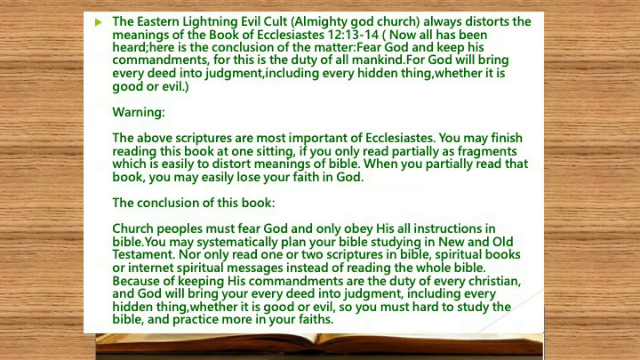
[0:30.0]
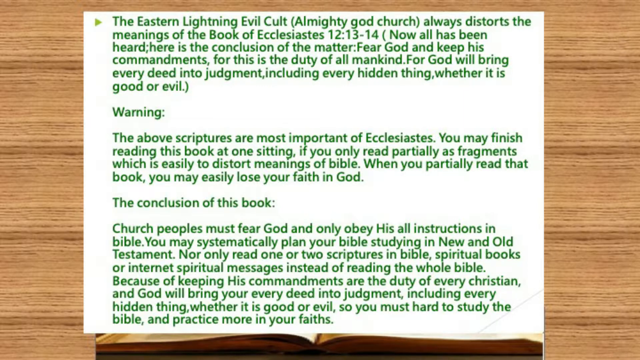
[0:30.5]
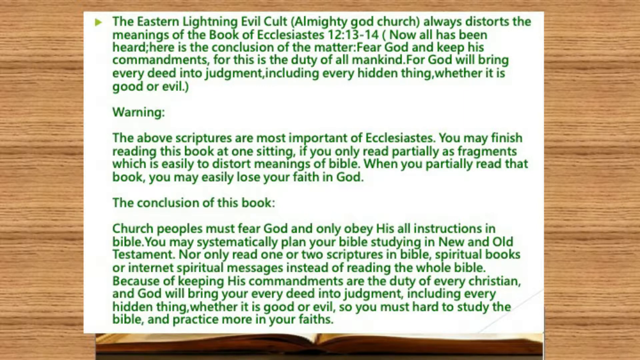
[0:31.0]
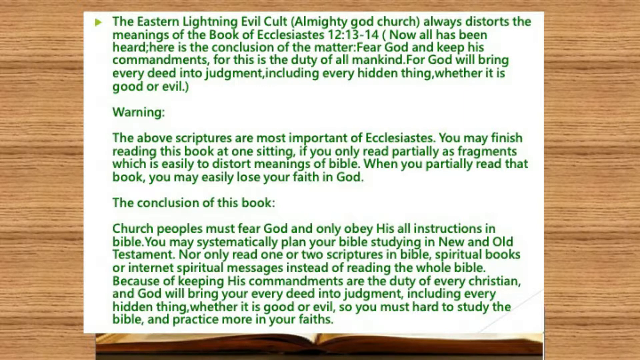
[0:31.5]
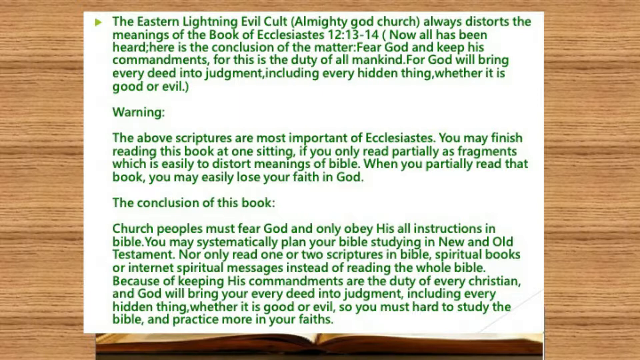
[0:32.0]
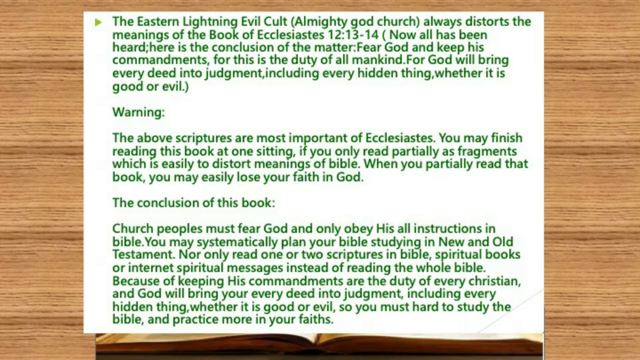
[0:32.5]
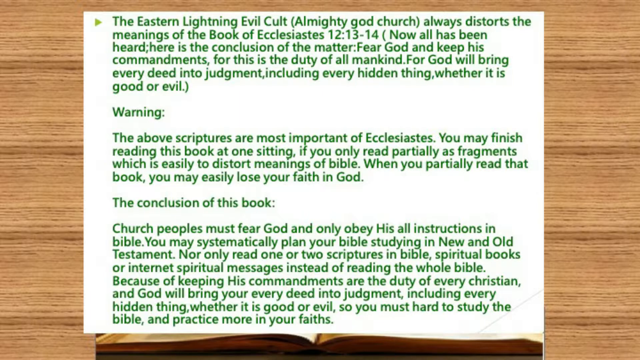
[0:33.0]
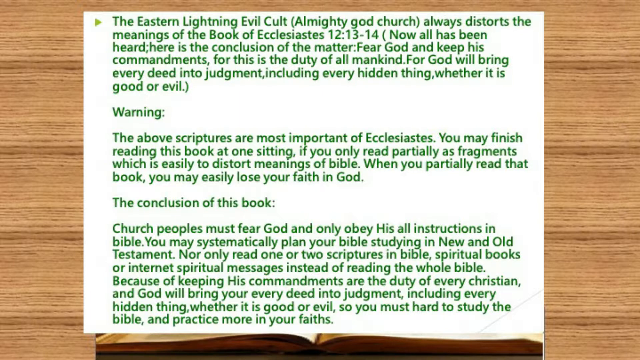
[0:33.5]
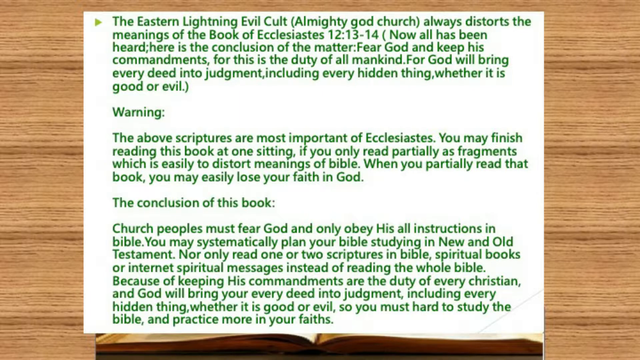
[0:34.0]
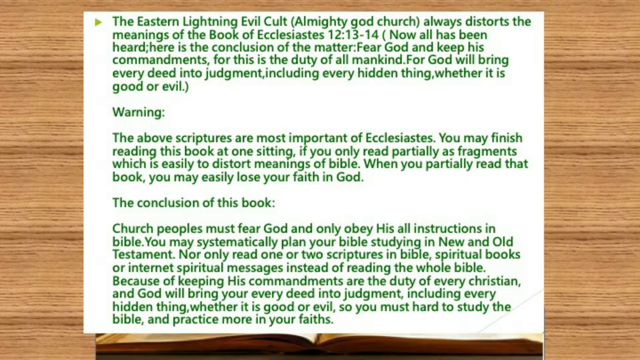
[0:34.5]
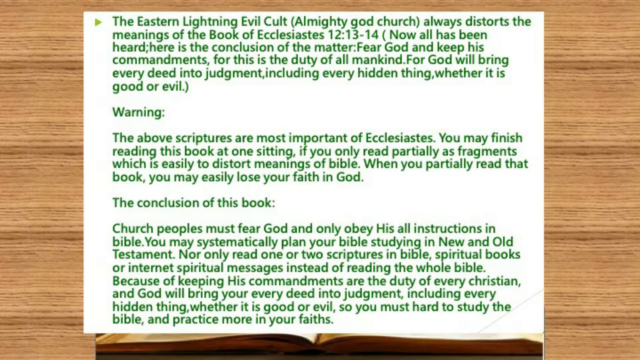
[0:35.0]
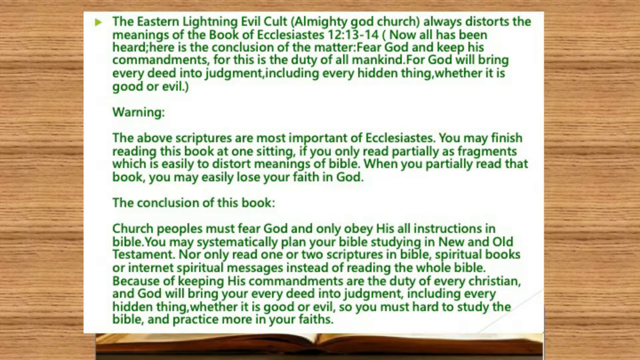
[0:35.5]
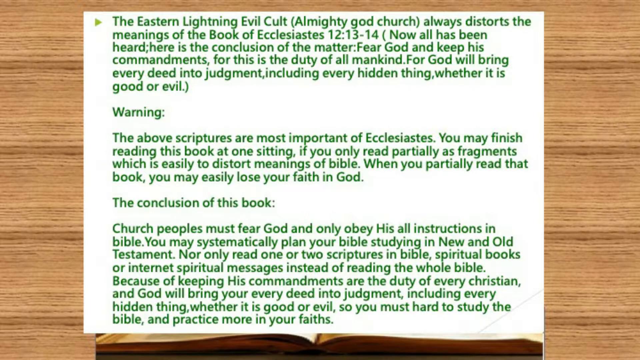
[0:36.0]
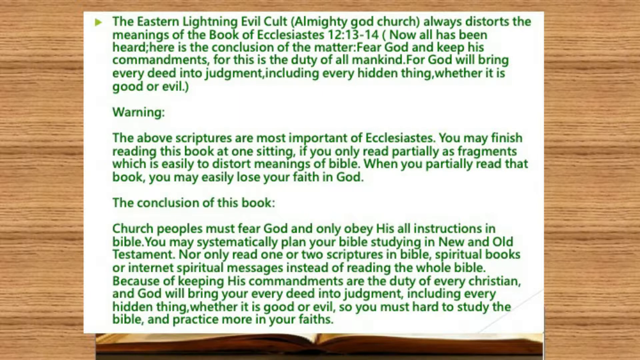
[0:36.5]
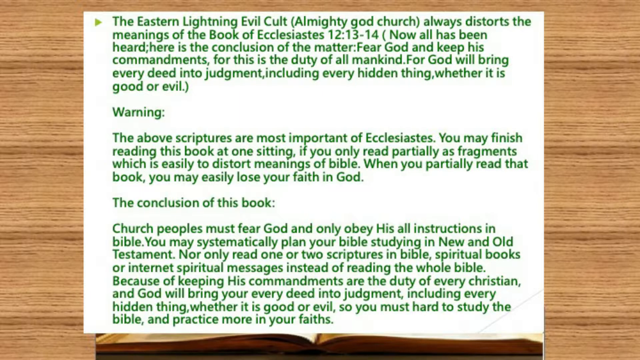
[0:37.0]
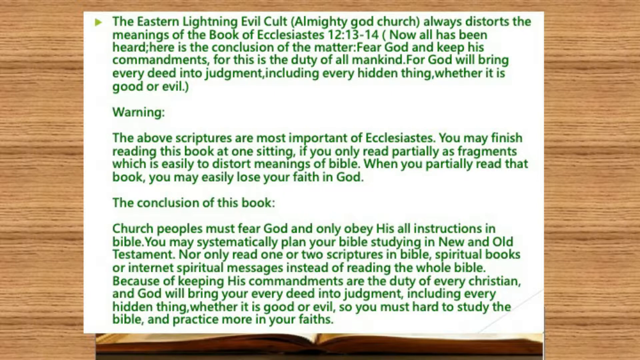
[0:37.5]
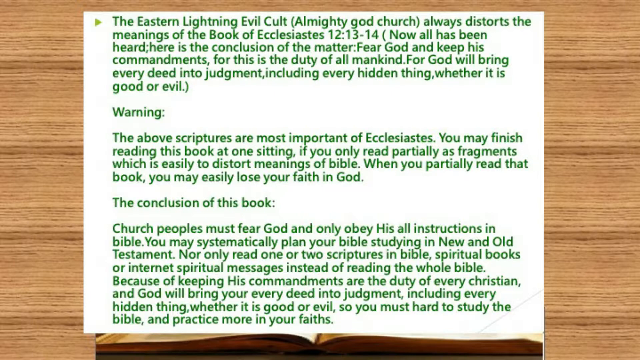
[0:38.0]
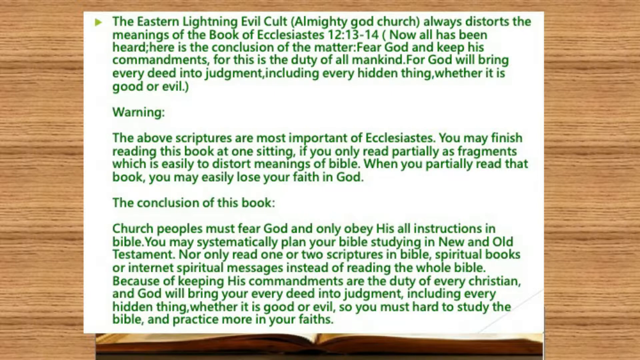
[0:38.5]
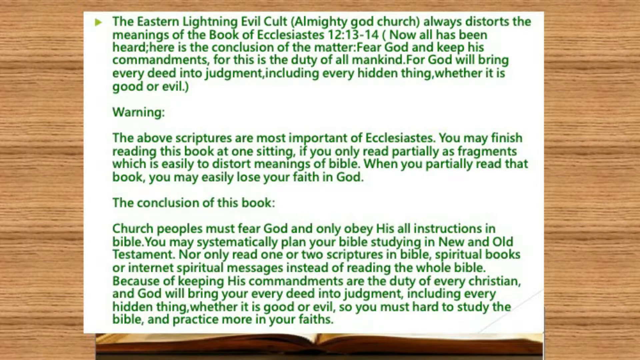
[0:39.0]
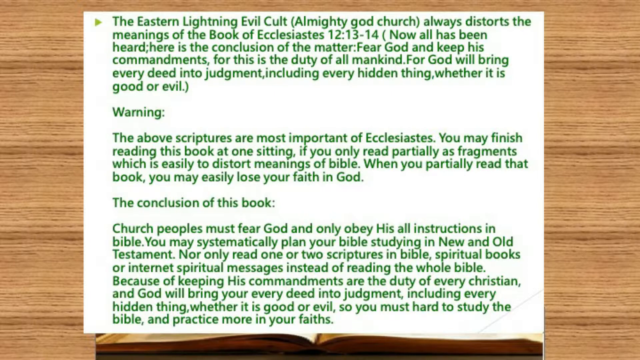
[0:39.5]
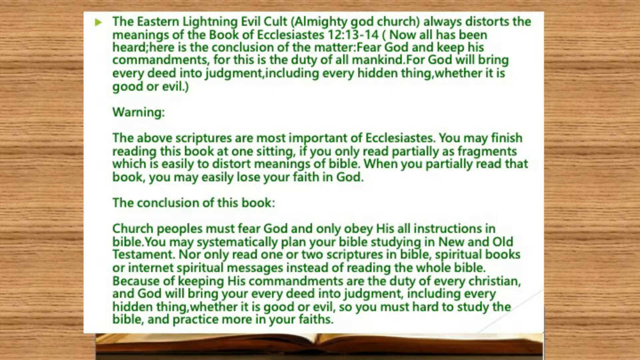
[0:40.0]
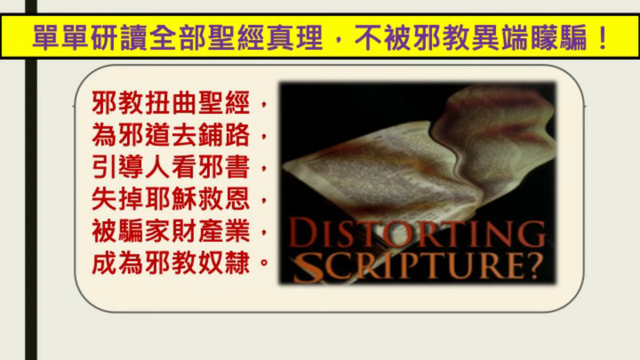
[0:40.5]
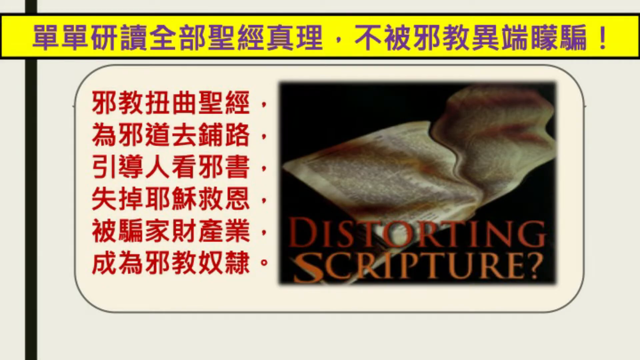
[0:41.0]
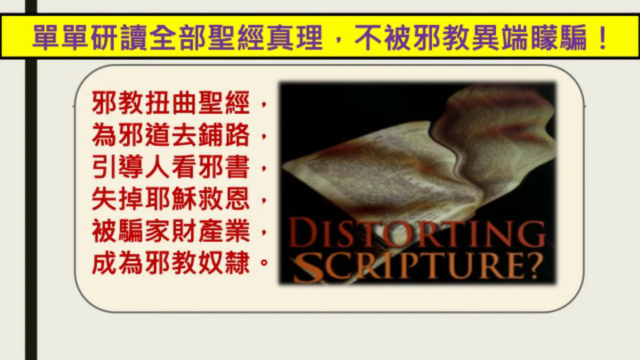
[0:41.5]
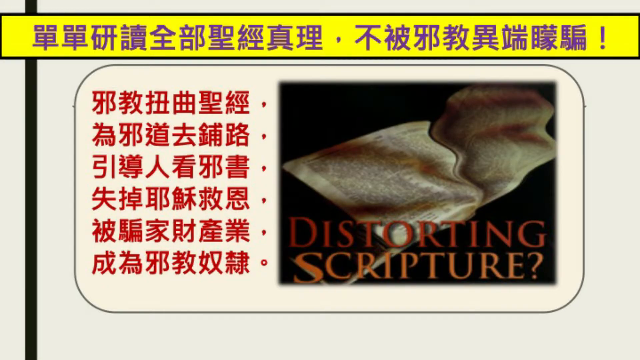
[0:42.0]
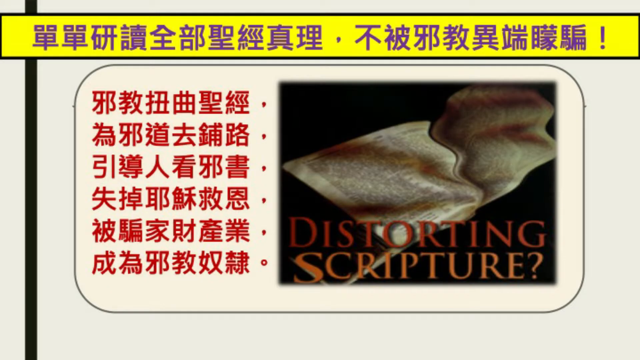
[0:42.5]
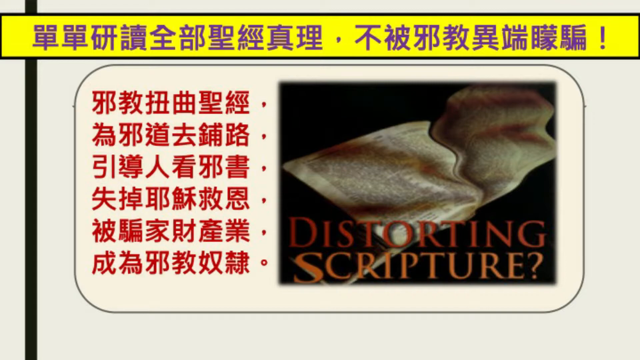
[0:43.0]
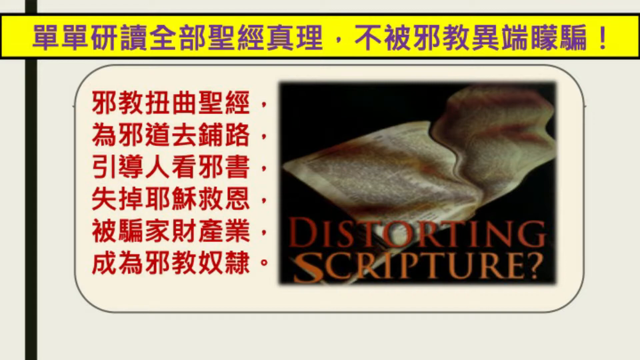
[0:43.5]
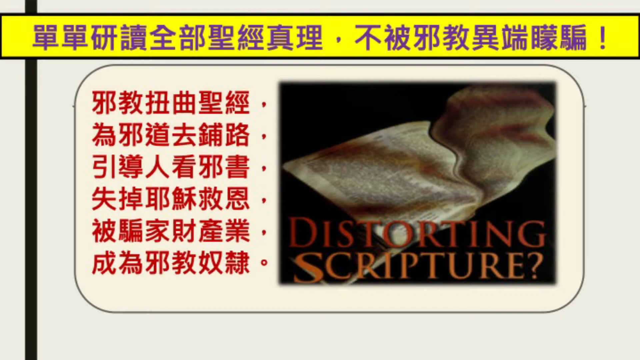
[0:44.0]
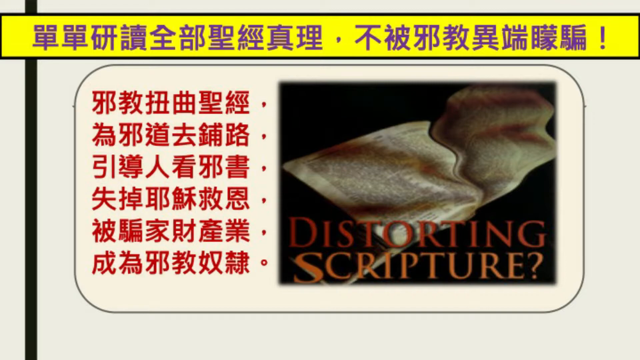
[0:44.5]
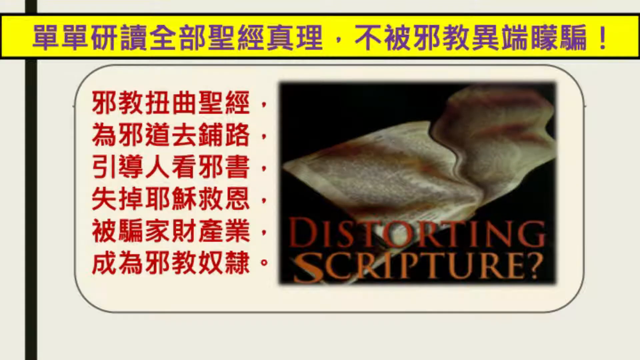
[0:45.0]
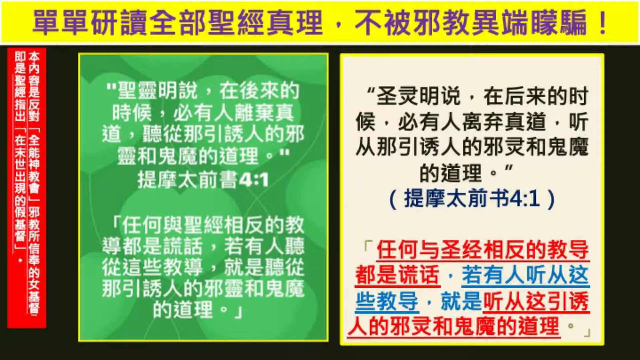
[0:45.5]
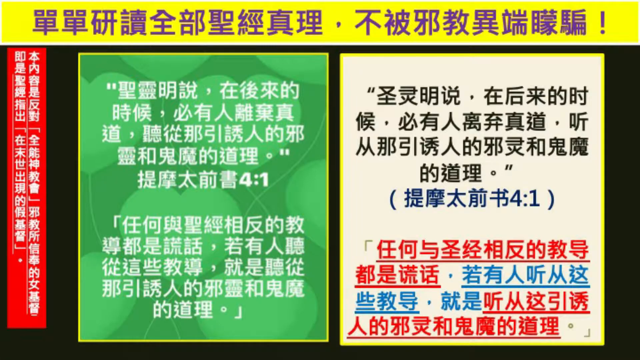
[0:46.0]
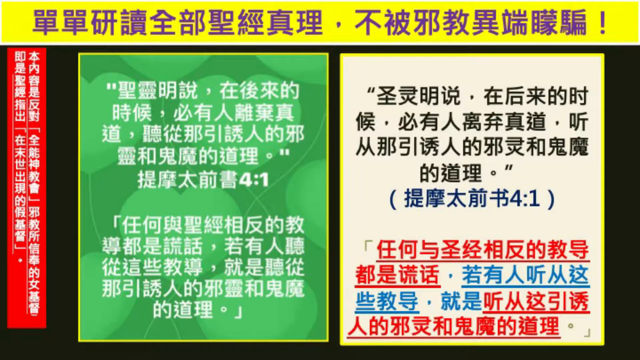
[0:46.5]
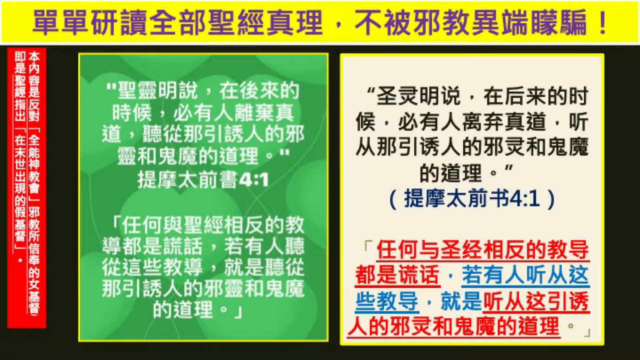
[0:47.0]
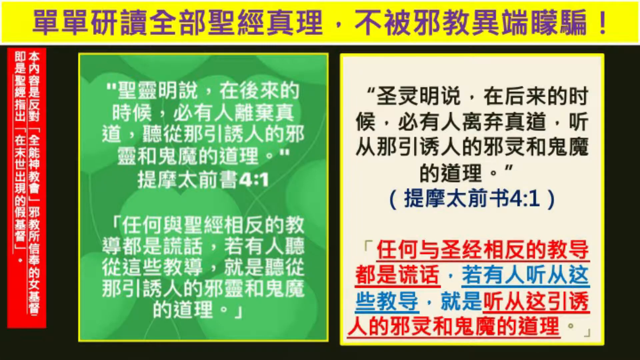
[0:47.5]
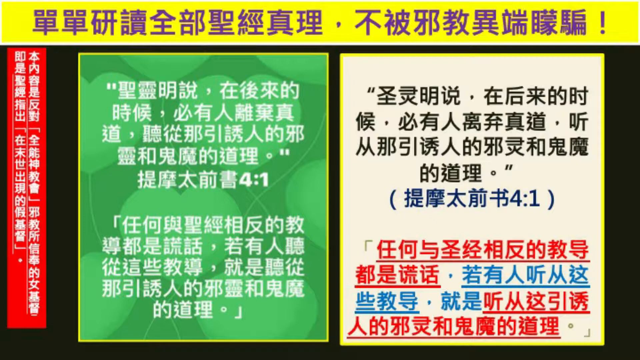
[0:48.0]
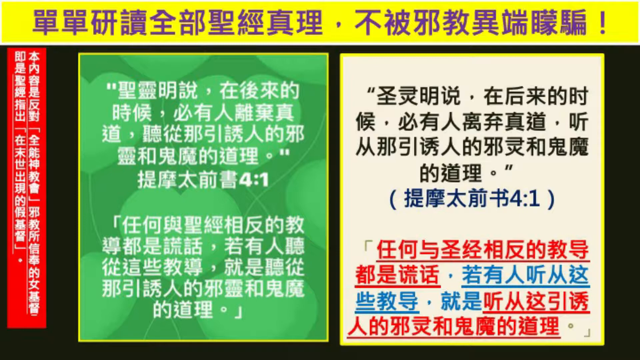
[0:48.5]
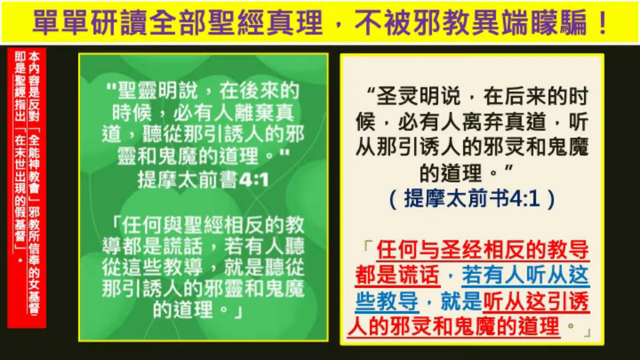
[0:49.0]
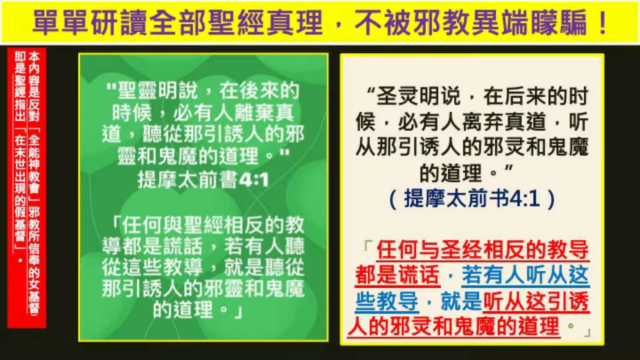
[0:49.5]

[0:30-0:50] The text saying the Eastern Lighting Cult, Almighty God Church always distorts the meaning of the Book of Ecclesiastes is shown. Another page follows, a distorting scripture page with a lot of Asian lettering and red letters. Then two pages appear: the left one is green with white writing, and the right one has black, blue and red writing in another language. Across the top is a yellow banner with purple writing, the background is black, and on the left side are two red banners with writing running down instead of across. The video goes back to the page on the wooden table, which gives a warning that "the above scriptures are more important than Ecclesiastes" and that "when you partially read that book, you may also lose faith in God easily." Finally the Bible is shown open, but nothing on it can be read because it is blurry.